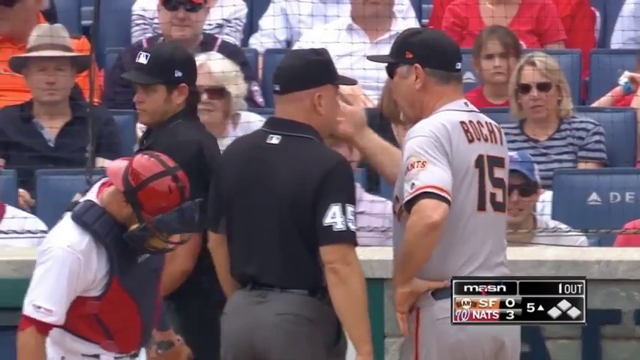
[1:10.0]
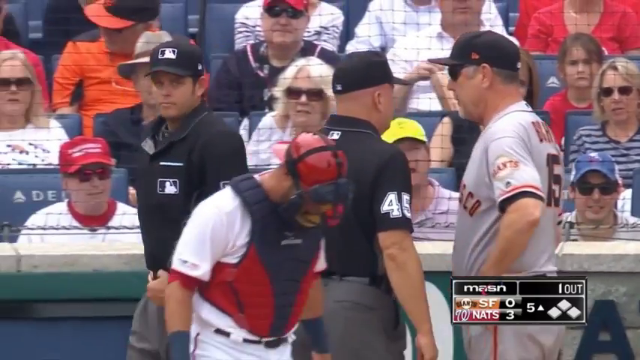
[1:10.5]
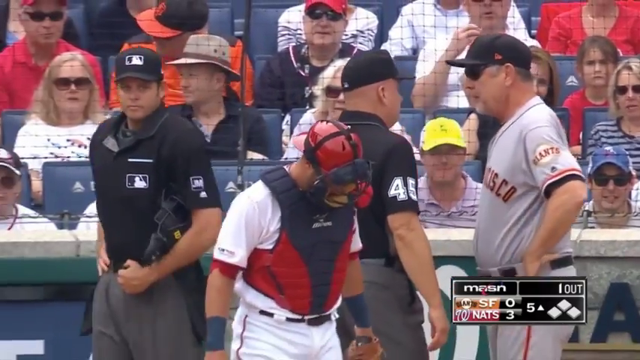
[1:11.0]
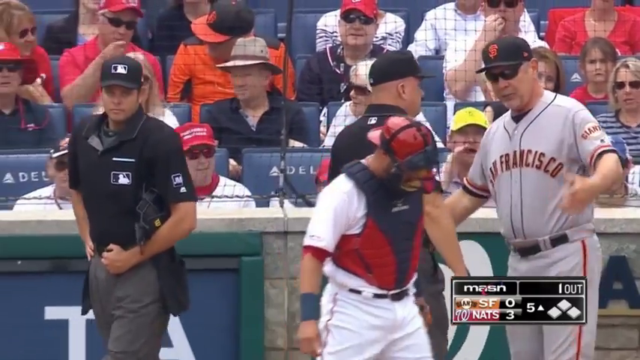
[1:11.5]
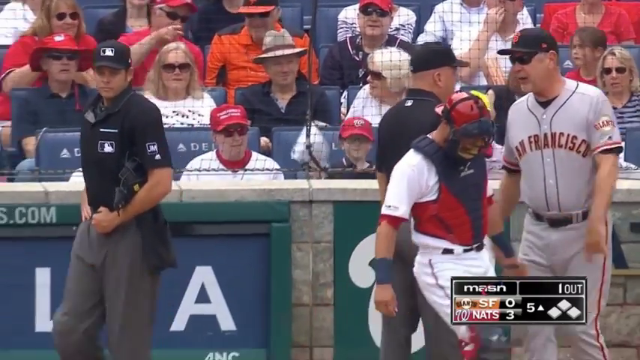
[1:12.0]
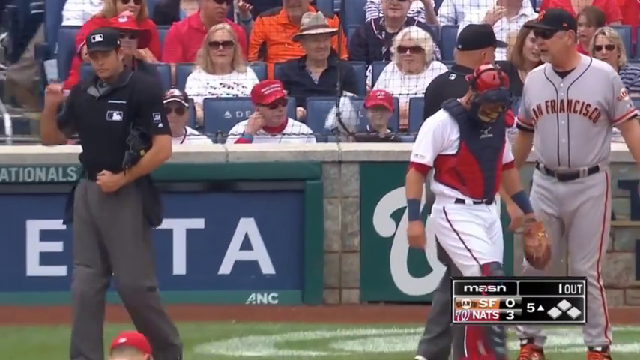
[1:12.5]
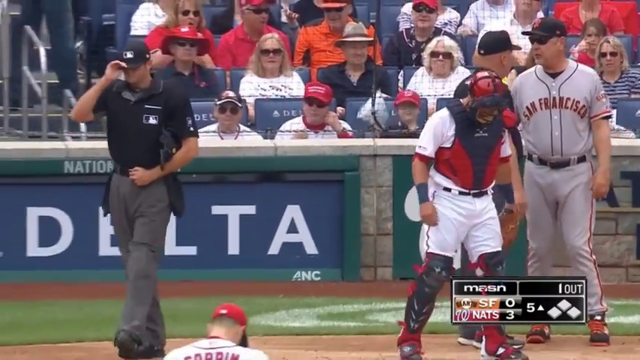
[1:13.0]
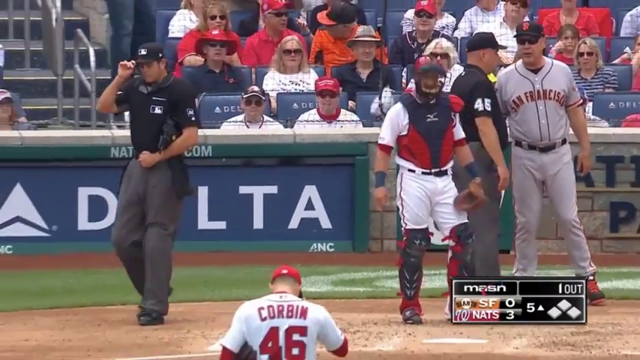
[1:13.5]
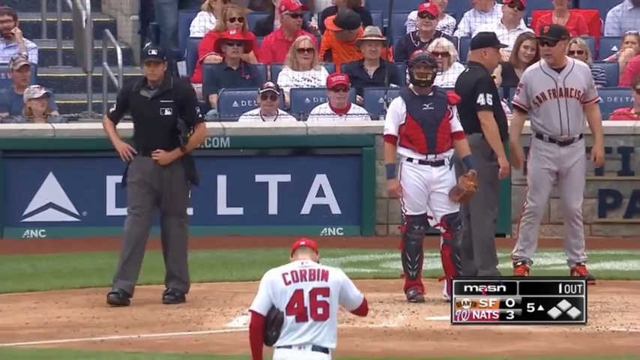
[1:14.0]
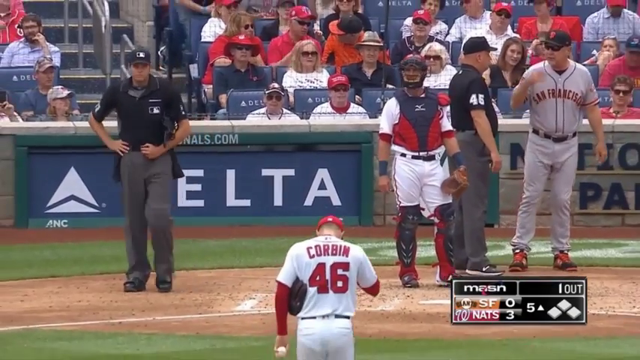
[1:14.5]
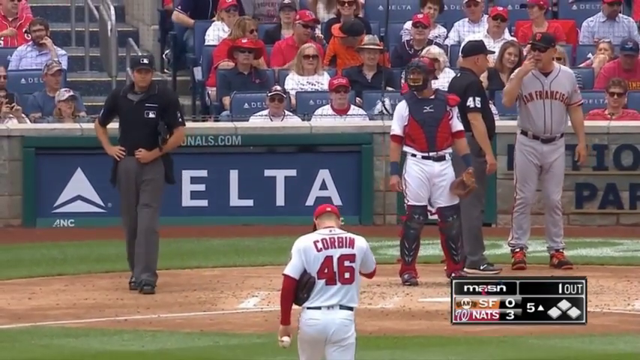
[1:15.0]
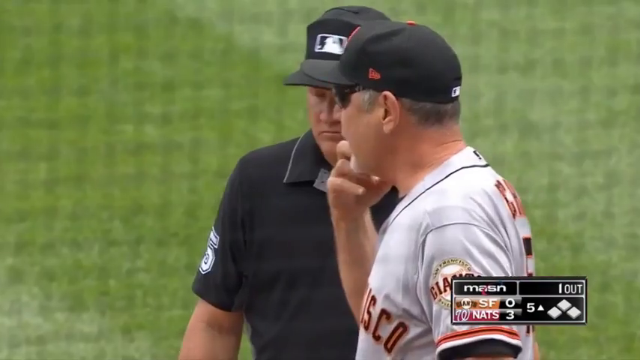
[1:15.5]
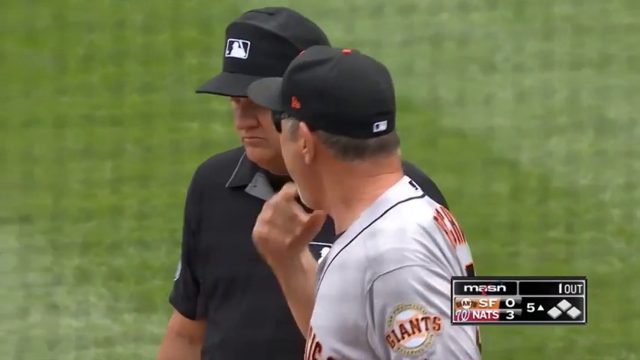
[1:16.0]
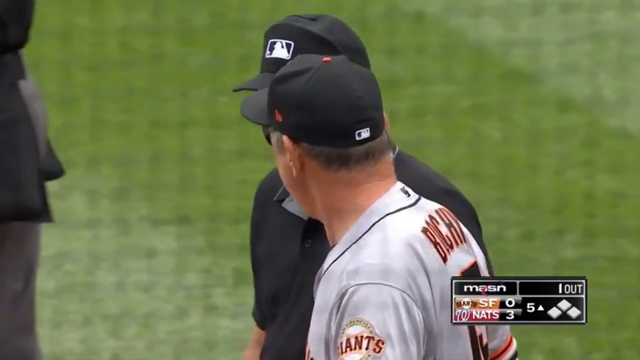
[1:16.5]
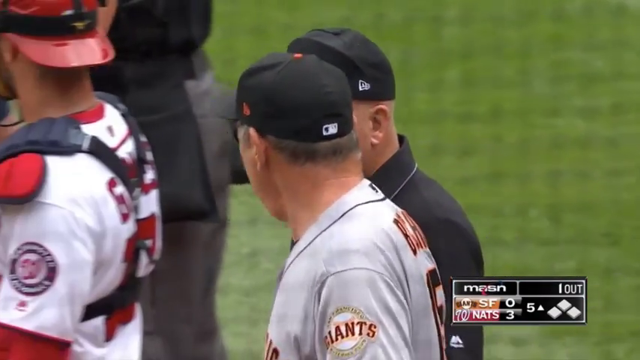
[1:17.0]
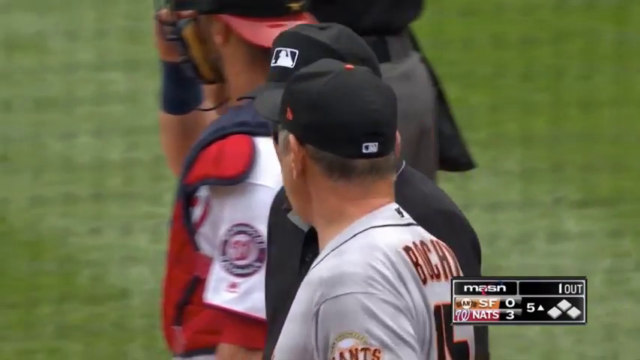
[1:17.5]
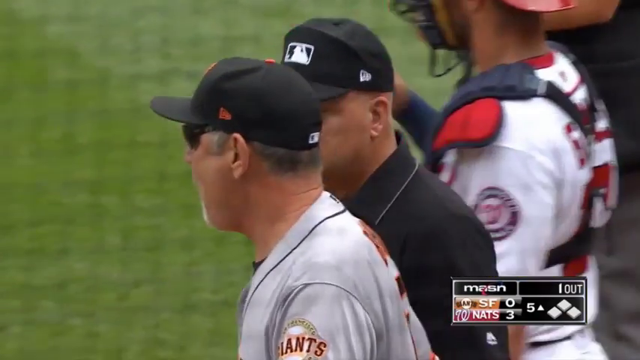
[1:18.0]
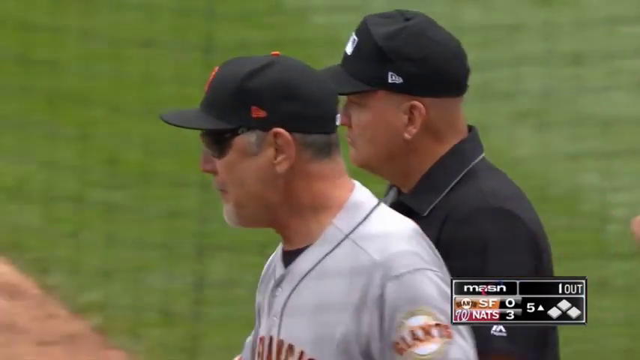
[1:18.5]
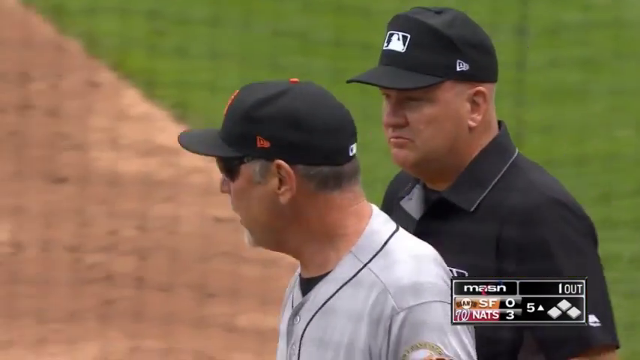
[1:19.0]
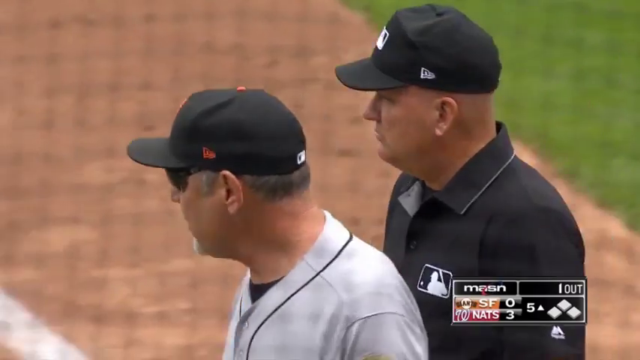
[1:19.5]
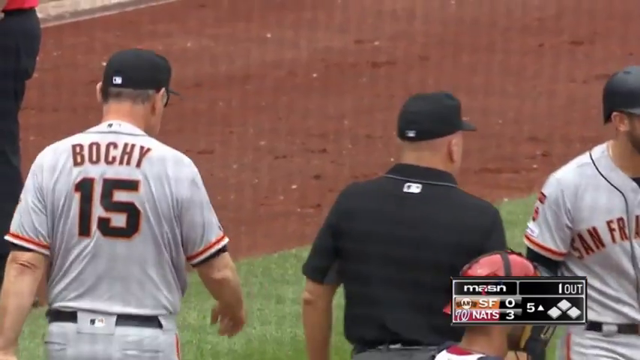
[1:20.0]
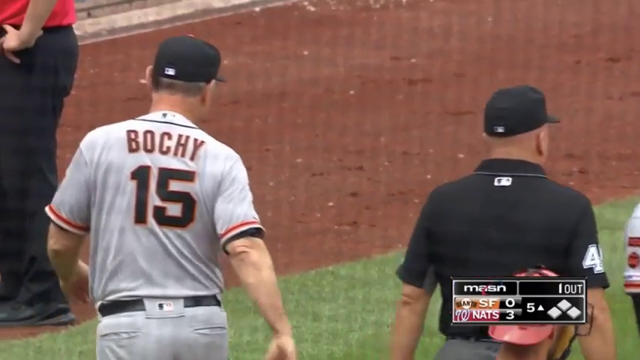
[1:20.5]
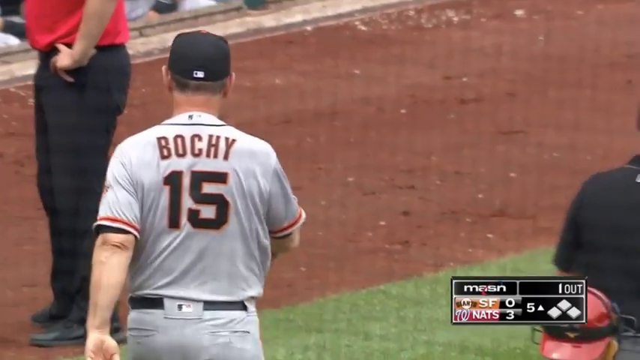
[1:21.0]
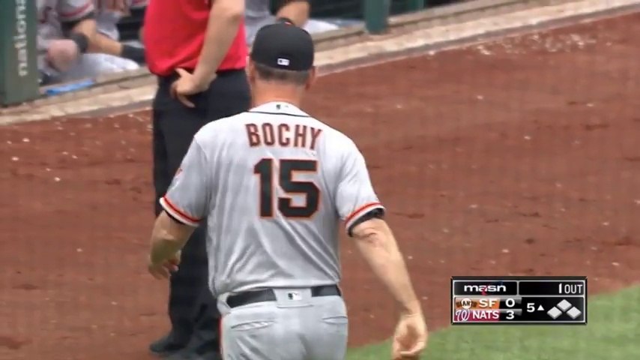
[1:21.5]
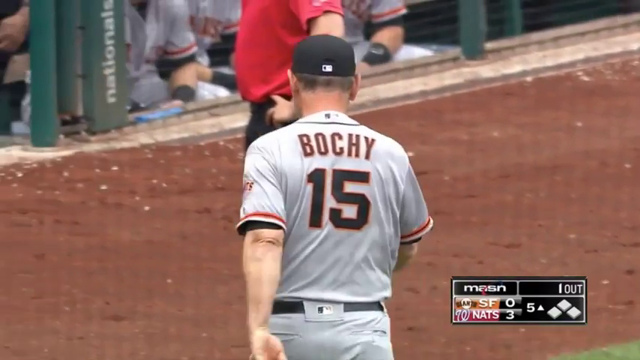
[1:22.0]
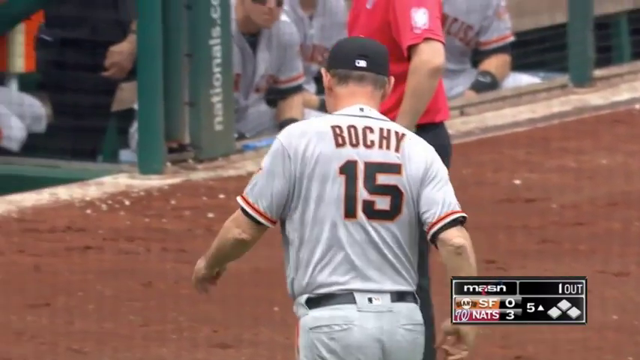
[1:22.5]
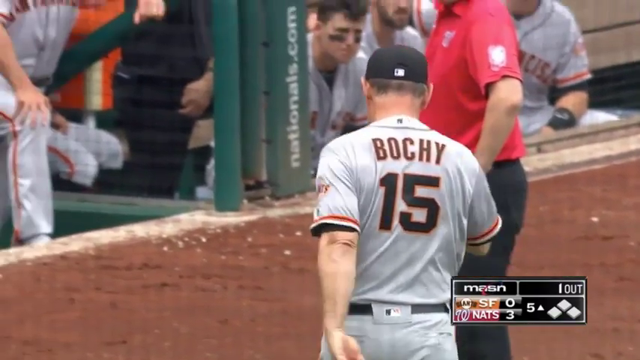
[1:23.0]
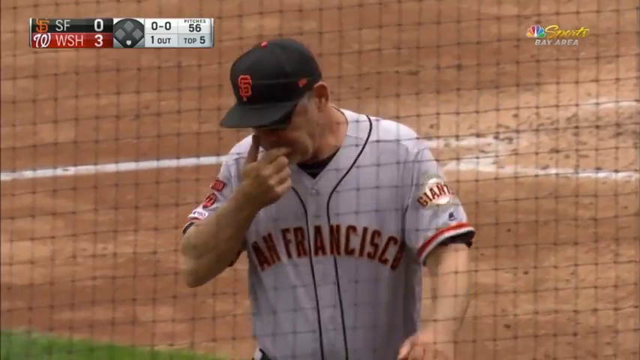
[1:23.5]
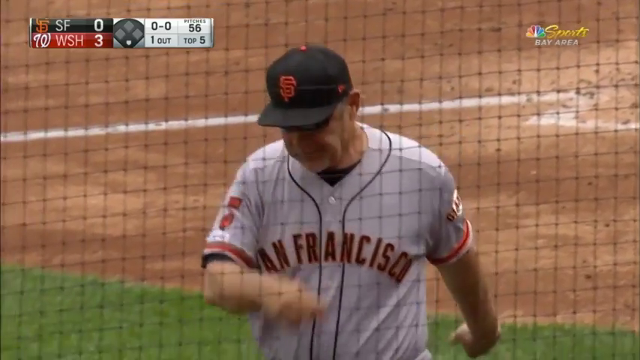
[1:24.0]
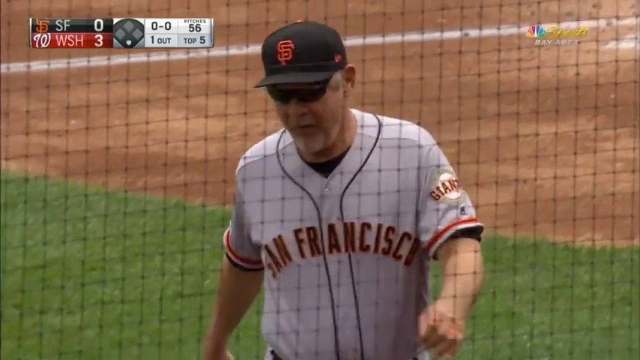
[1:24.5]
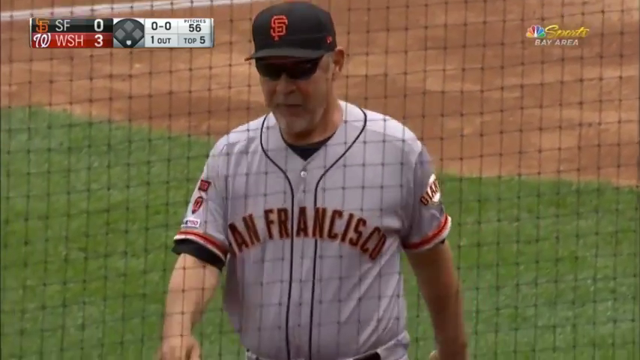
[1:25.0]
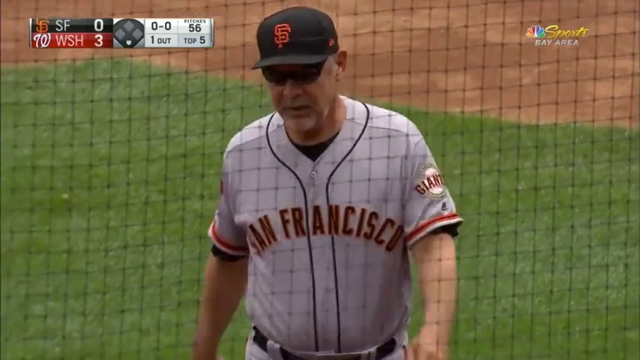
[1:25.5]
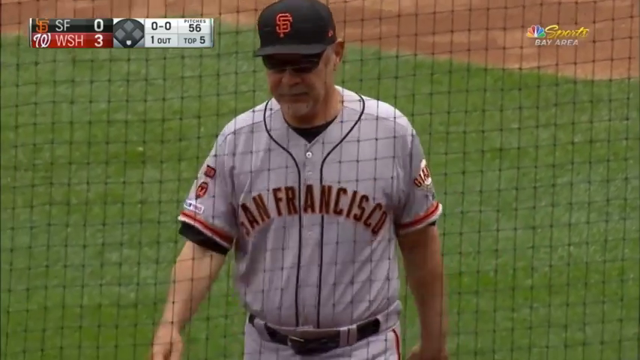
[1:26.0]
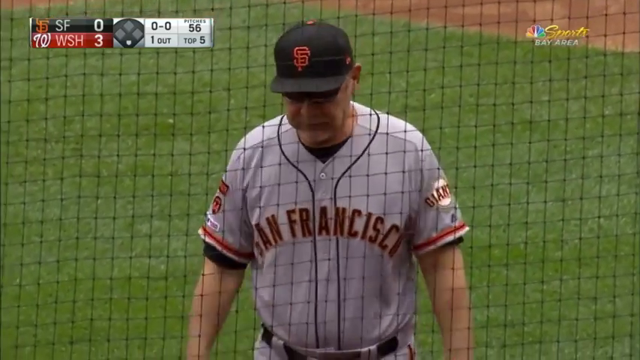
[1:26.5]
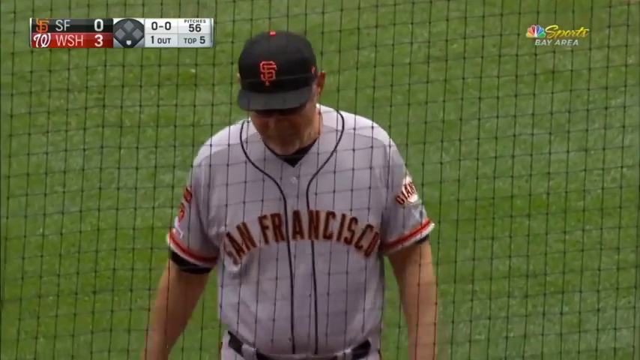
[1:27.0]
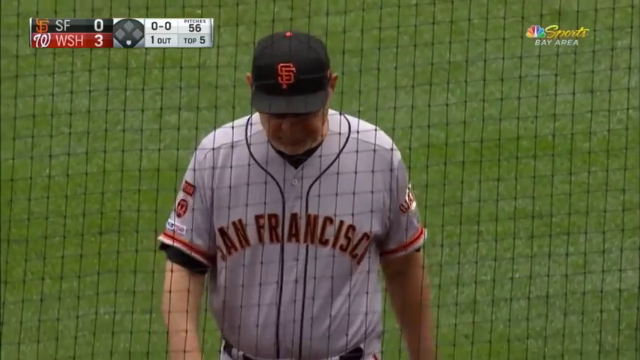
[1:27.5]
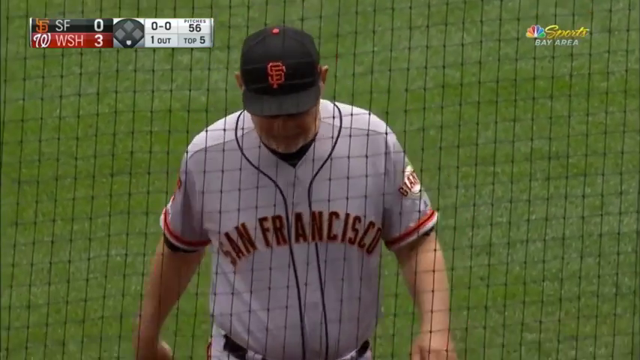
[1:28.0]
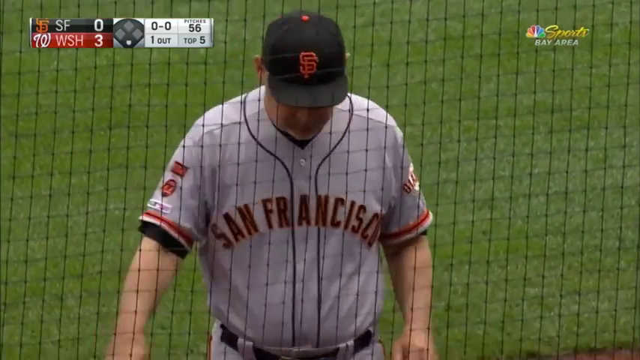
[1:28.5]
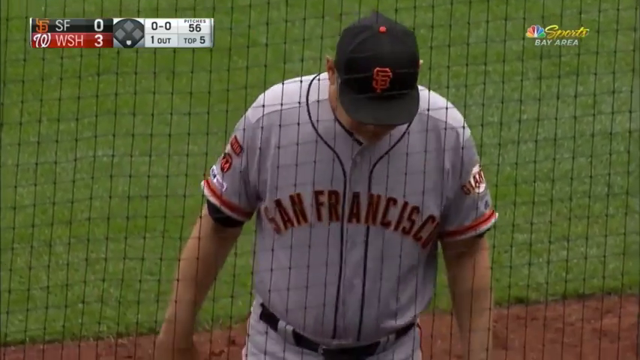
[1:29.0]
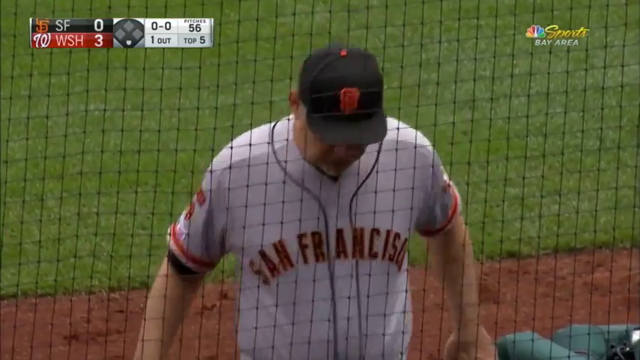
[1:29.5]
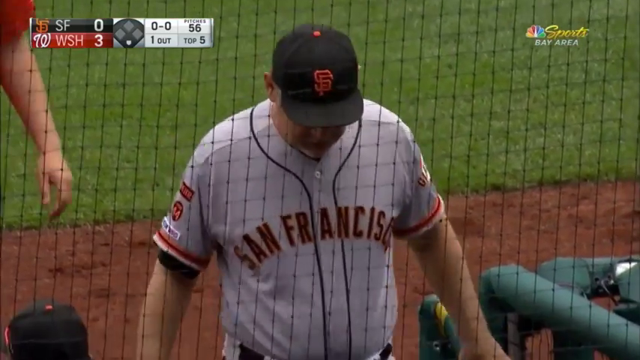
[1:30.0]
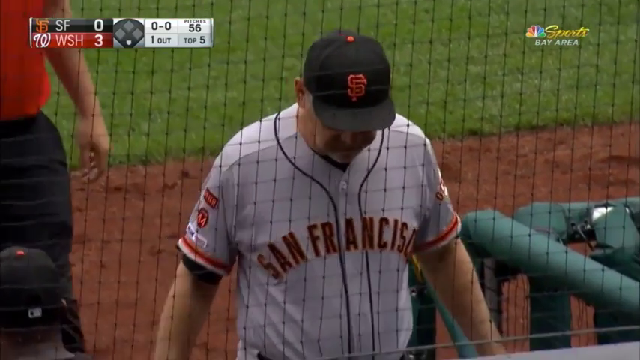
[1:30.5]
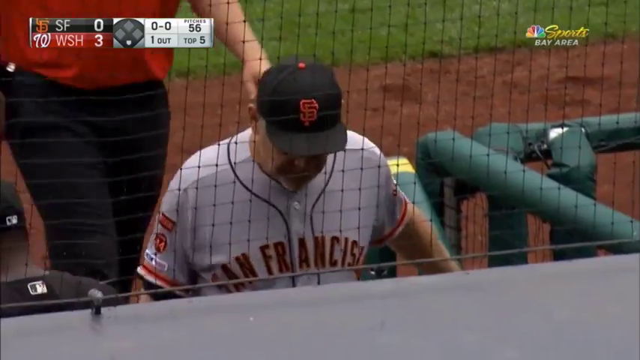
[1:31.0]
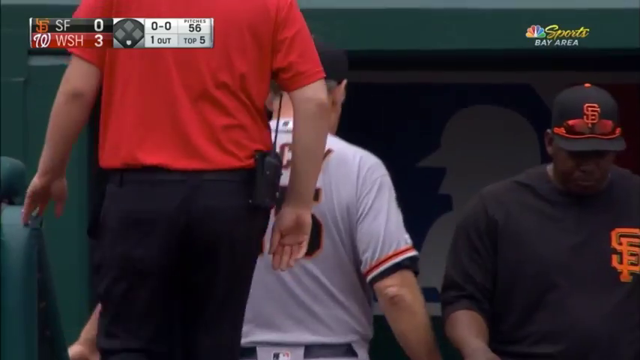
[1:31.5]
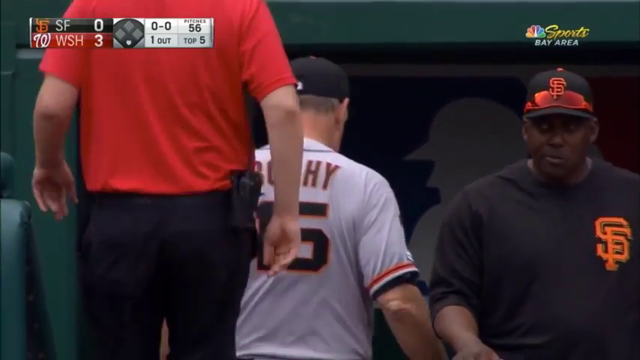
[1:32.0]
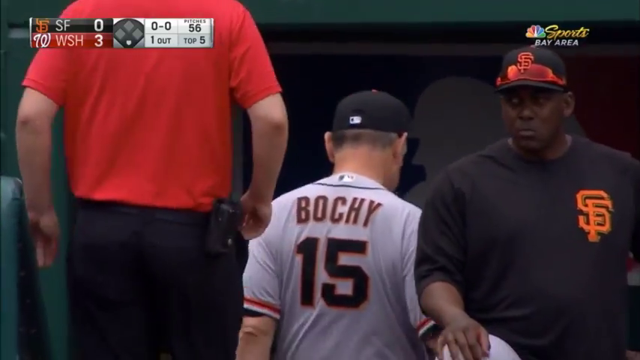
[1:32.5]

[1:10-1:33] Bochy, wearing number 15 for San Francisco and possibly a coach or a player, is still talking to the referee. He was talking to what looks like an umpire in a black shirt with number 45, just before he appears to be escorted off the pitch by somebody in a red shirt; he appears to have been removed from the pitch and walks down some stairs. The score is unchanged. Corbyn, the number 46 pitcher, walks around waiting for play to continue. The first referee walks away from the scene, leaving the other umpire to deal with the man.